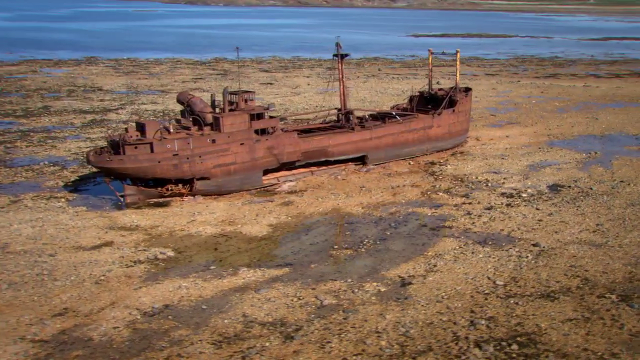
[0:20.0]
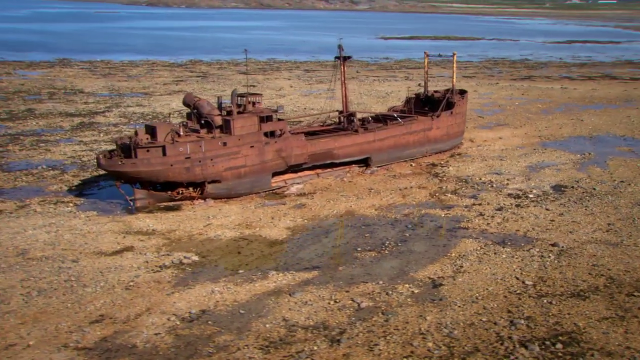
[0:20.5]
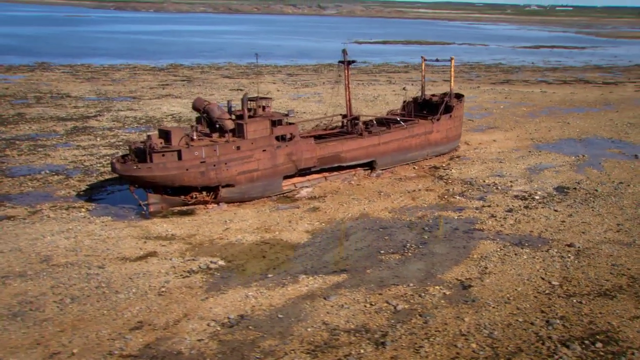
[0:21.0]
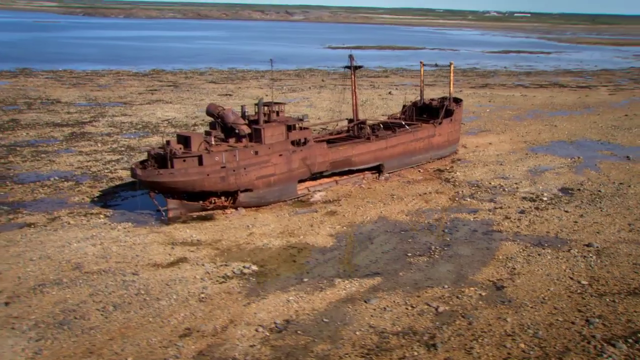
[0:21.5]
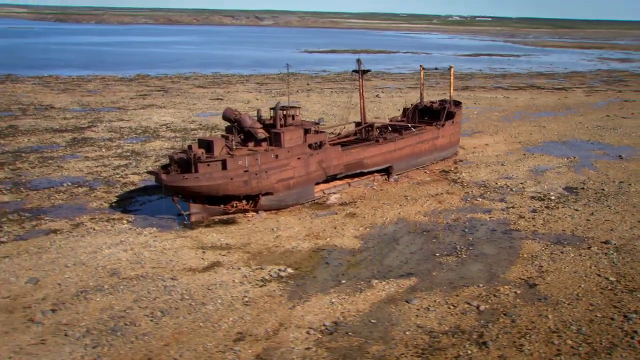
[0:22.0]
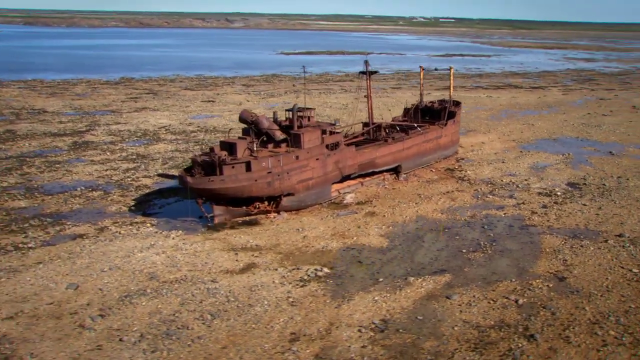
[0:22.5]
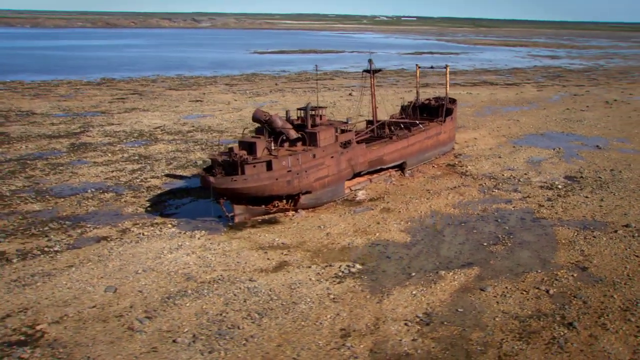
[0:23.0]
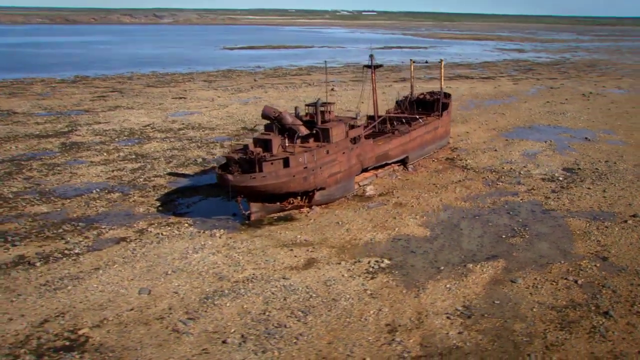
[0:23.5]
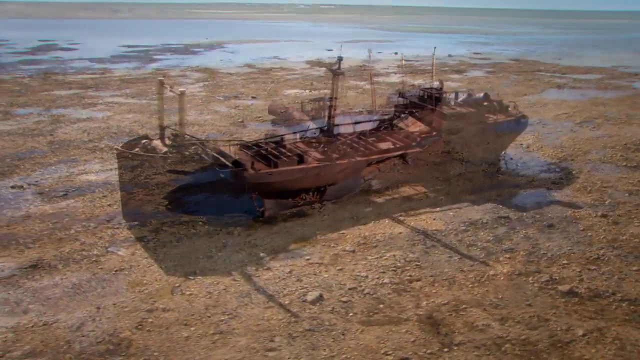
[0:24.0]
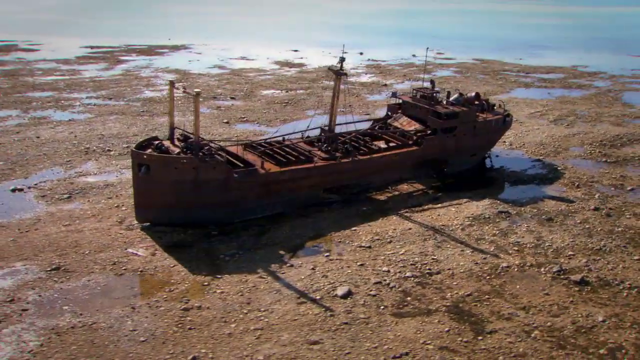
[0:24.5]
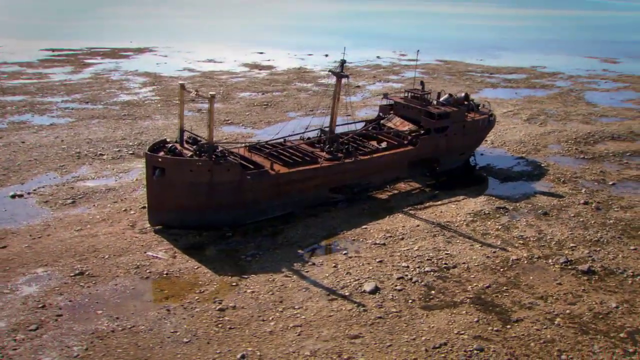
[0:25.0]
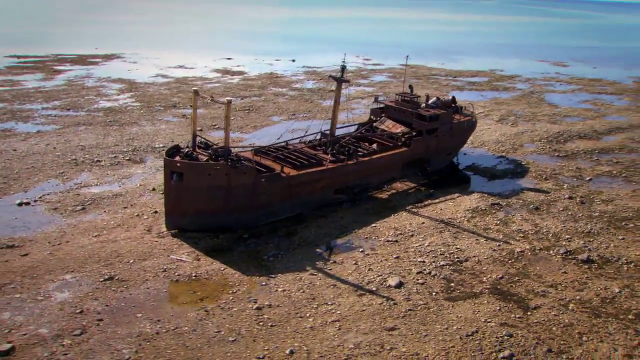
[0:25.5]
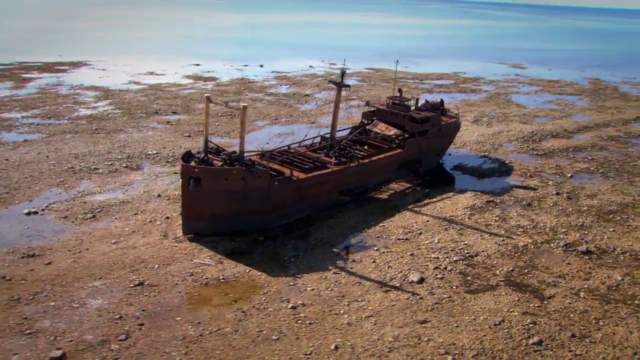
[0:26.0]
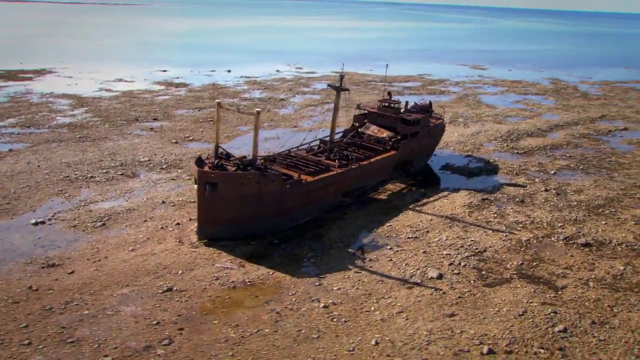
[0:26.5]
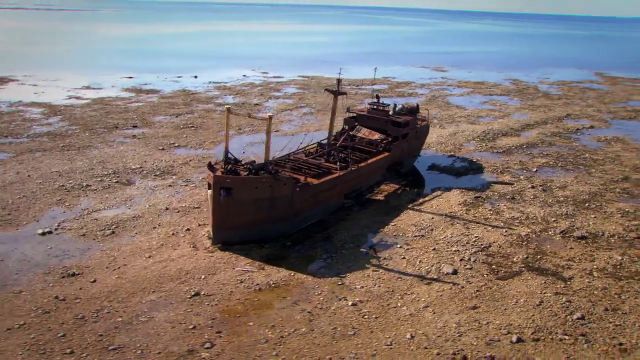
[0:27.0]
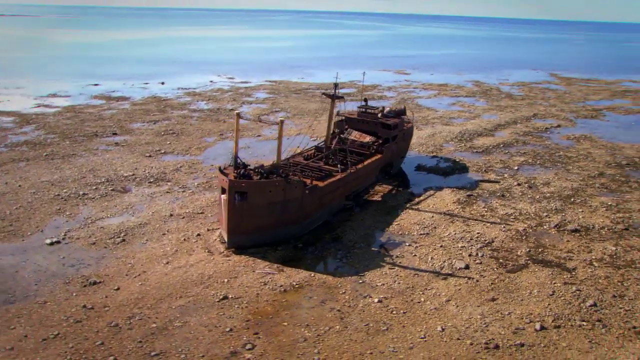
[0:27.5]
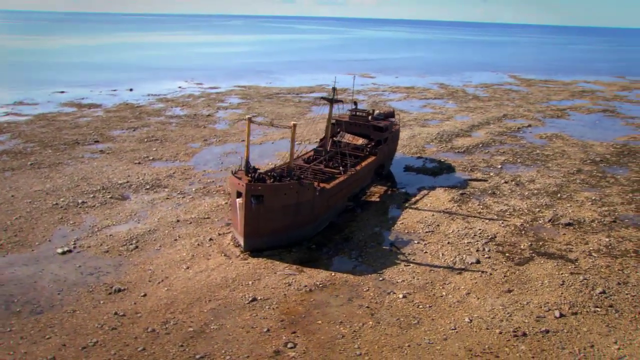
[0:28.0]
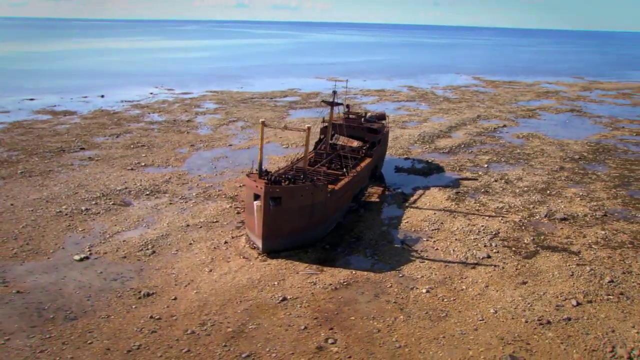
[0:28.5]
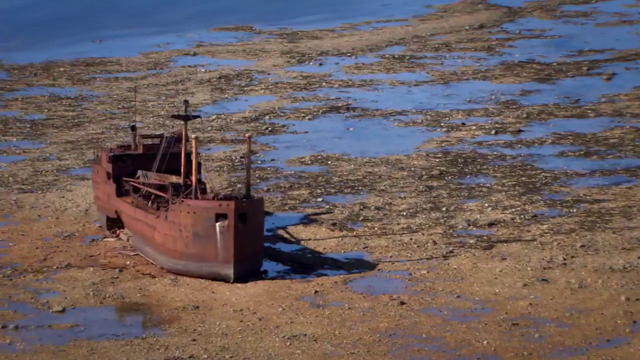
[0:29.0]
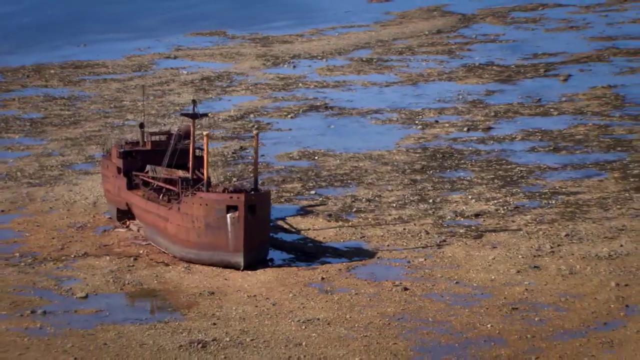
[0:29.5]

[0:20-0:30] A close-up shows the large boat or small ship, rusted out and resting on a sandbar with water behind it. An aerial view pans constantly to the left, followed by a different view and then yet another view of the ship, like three different aerial views edited together. The ship is rust colored and has a metal mast in the center; it could be a fishing ship.